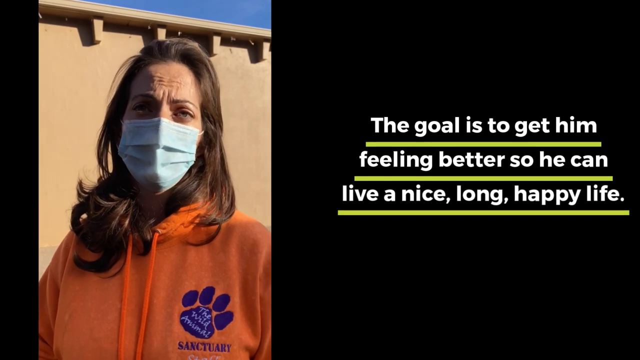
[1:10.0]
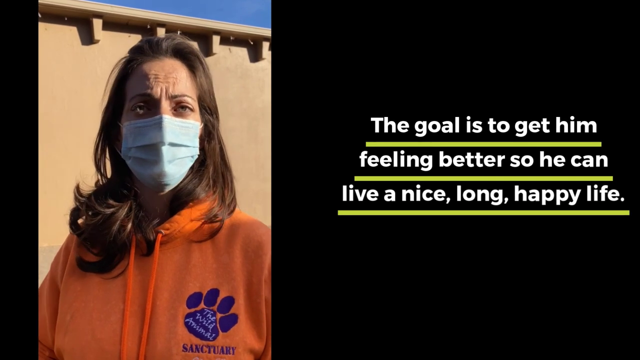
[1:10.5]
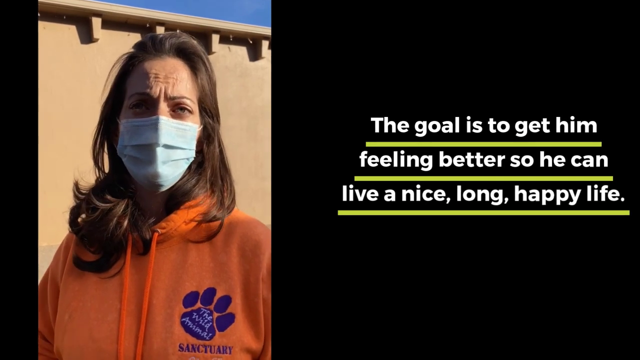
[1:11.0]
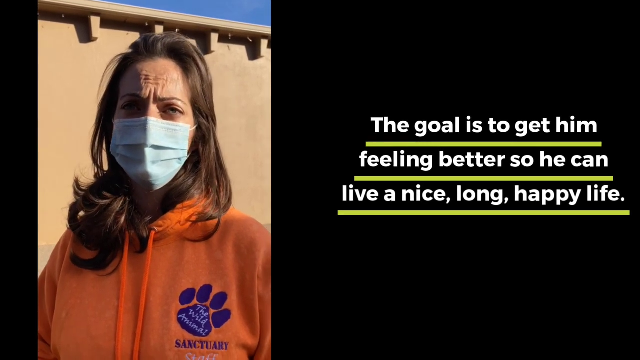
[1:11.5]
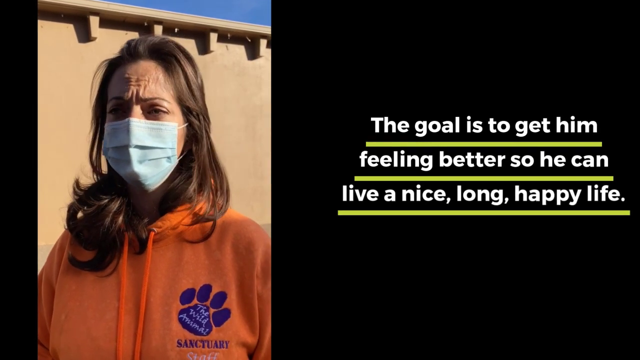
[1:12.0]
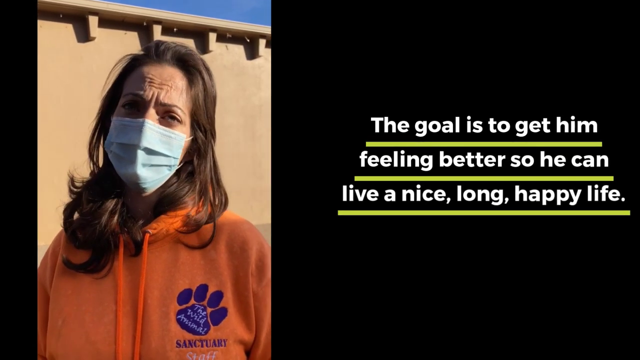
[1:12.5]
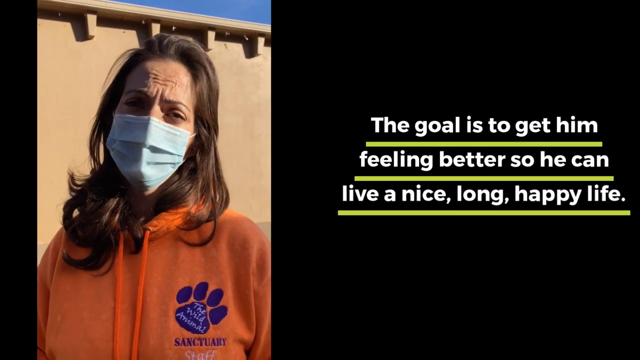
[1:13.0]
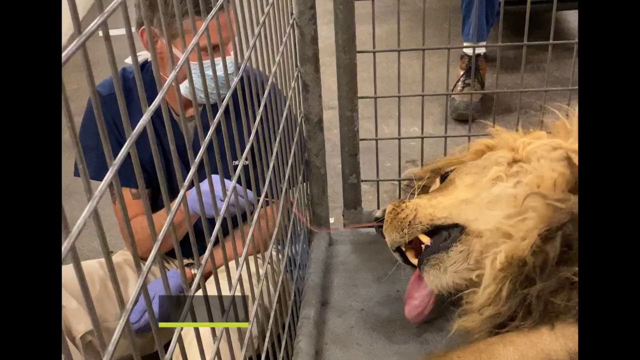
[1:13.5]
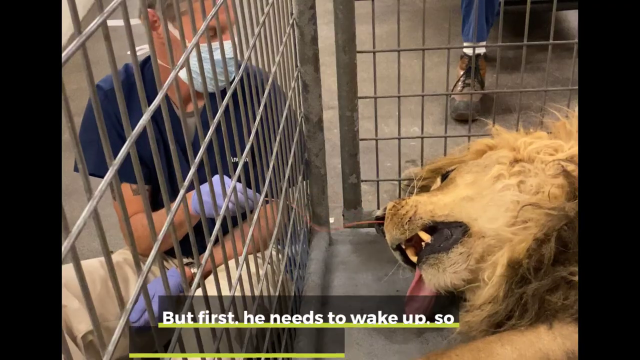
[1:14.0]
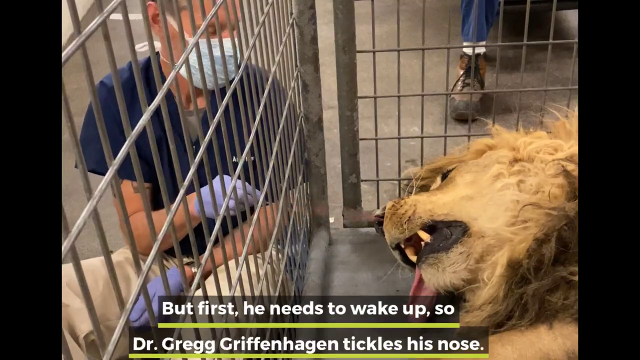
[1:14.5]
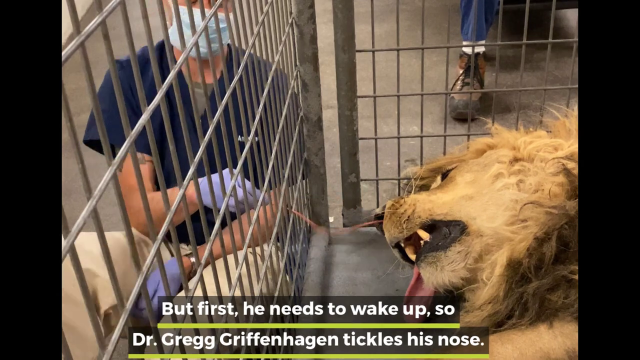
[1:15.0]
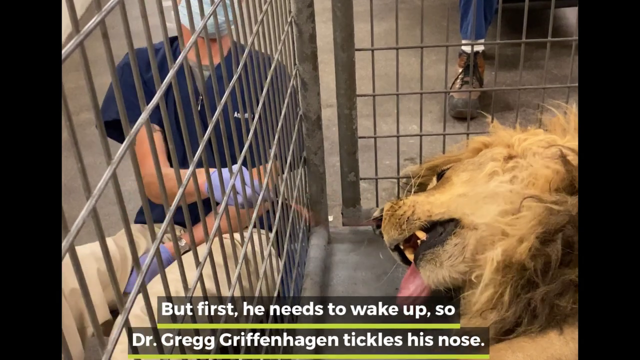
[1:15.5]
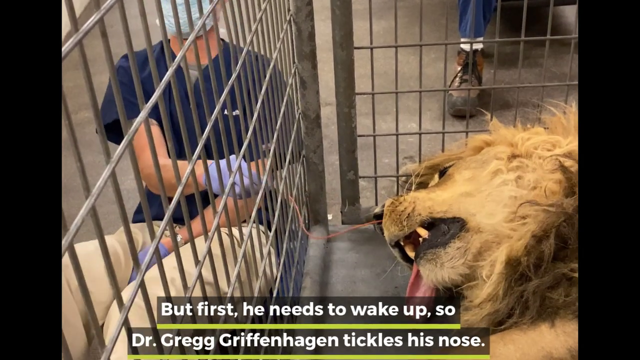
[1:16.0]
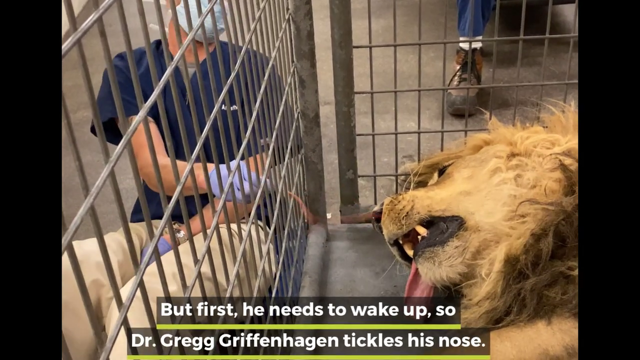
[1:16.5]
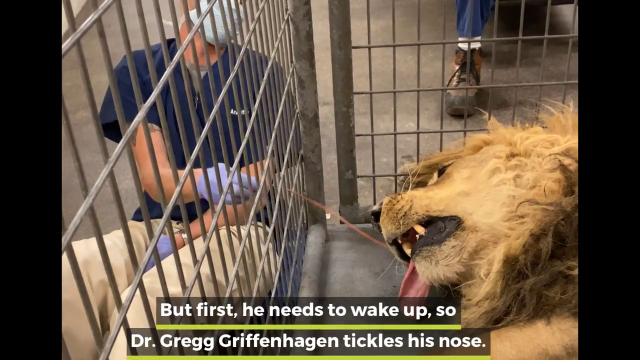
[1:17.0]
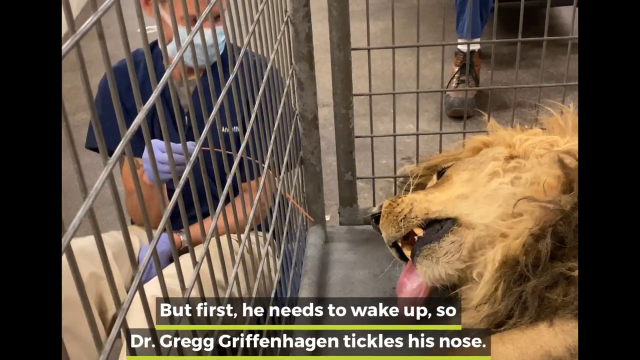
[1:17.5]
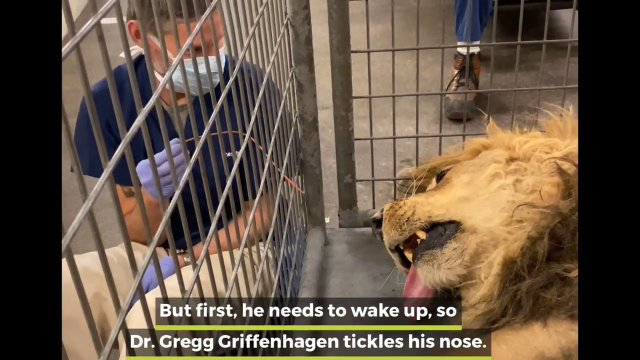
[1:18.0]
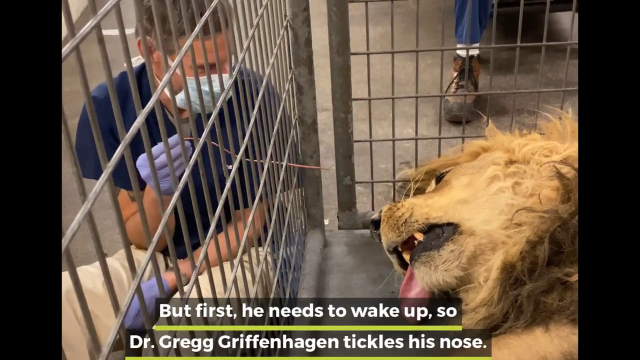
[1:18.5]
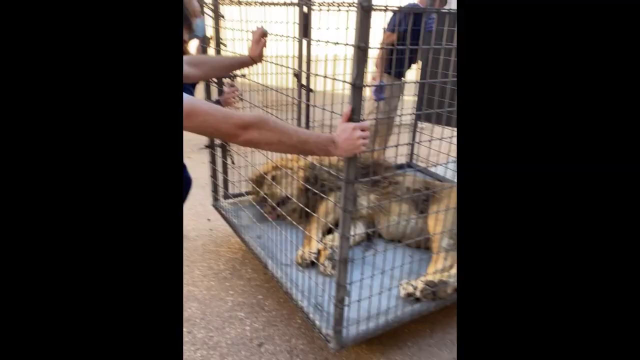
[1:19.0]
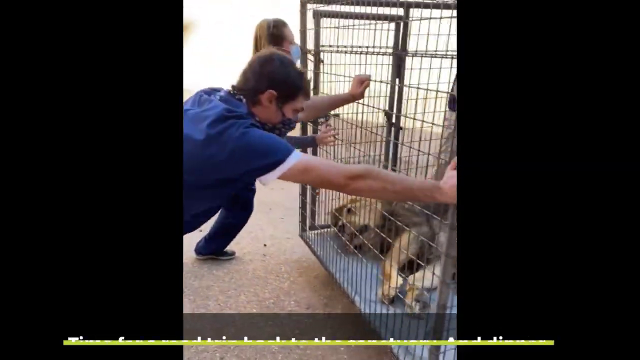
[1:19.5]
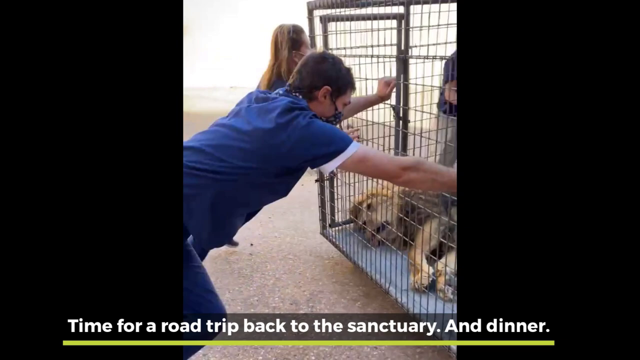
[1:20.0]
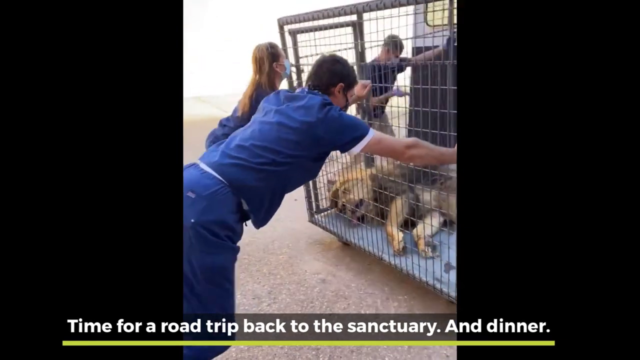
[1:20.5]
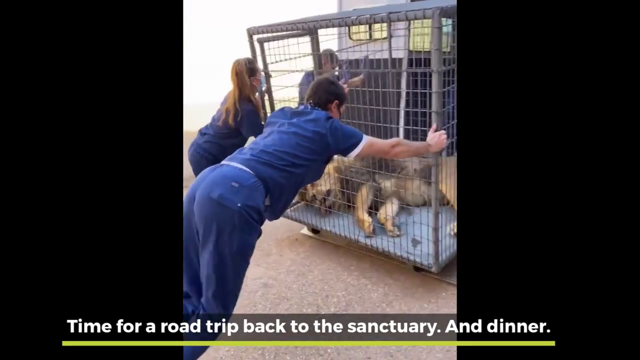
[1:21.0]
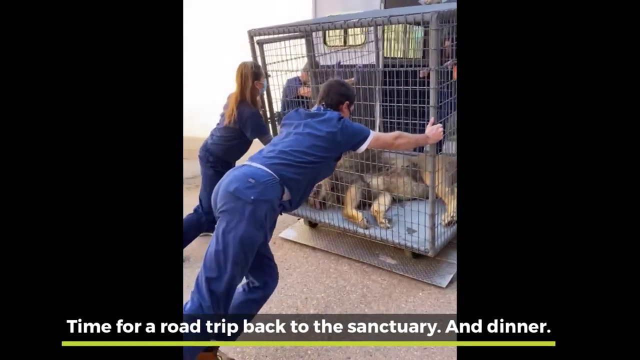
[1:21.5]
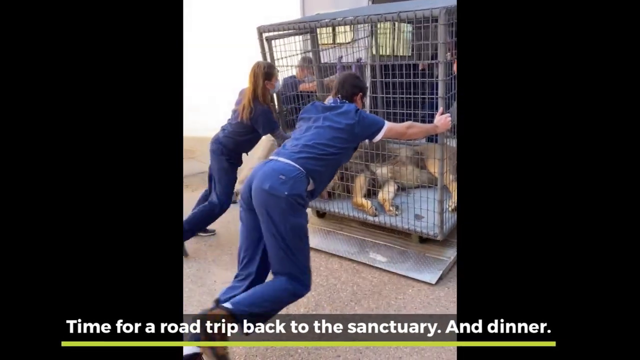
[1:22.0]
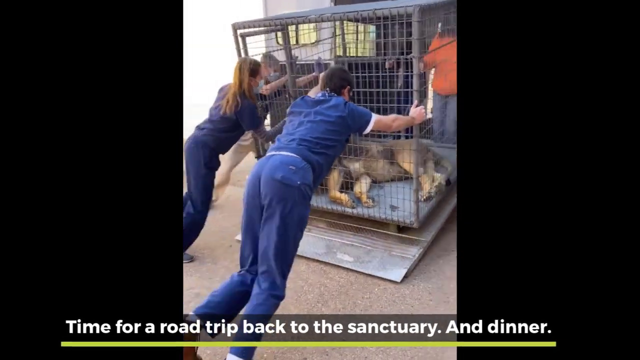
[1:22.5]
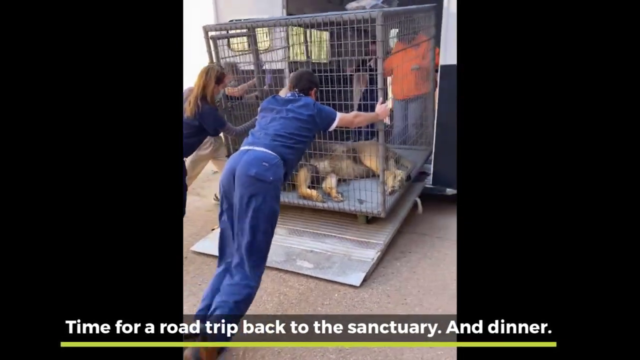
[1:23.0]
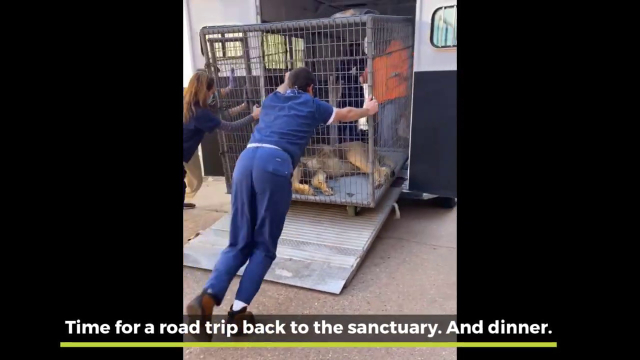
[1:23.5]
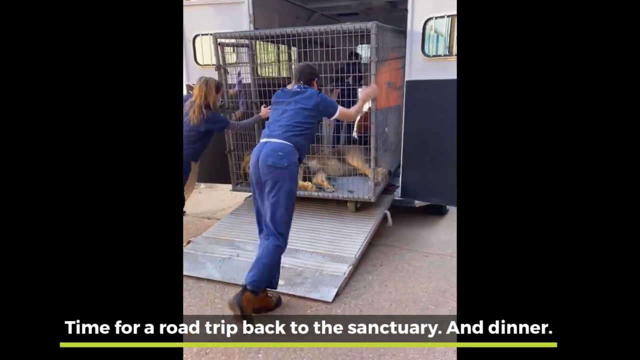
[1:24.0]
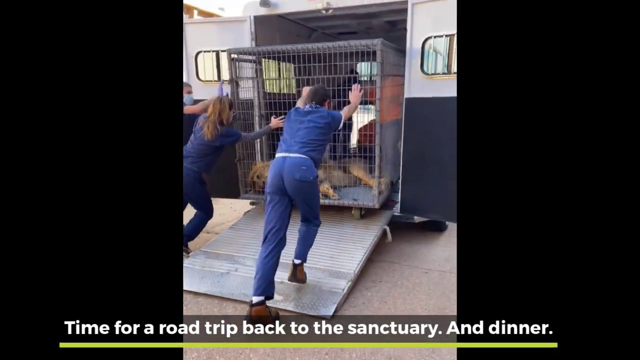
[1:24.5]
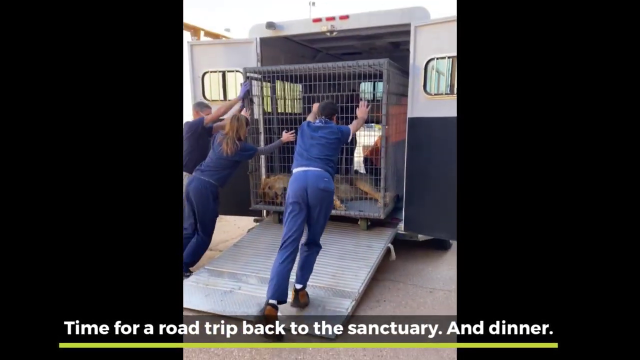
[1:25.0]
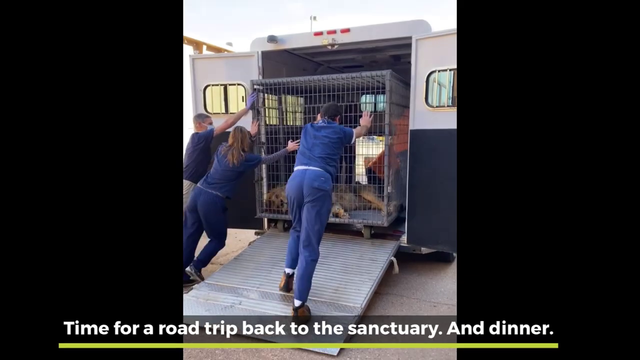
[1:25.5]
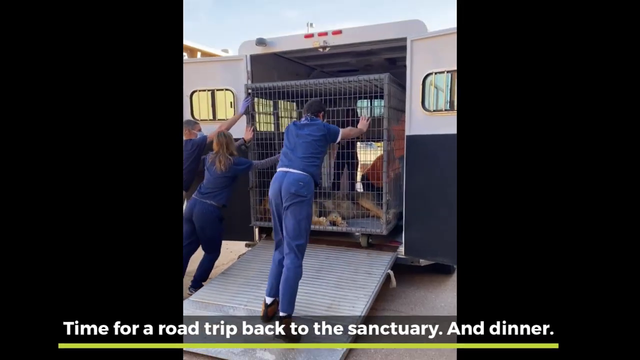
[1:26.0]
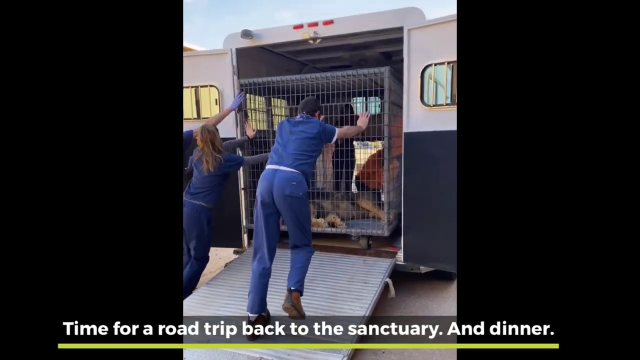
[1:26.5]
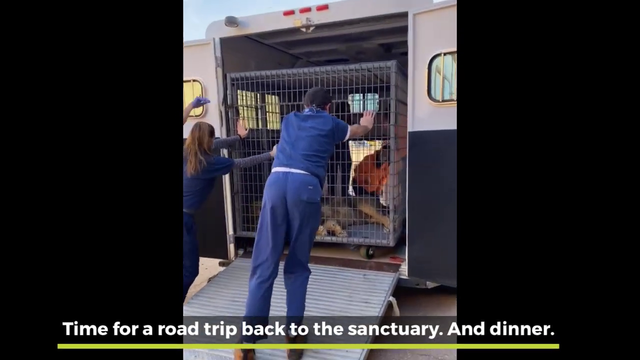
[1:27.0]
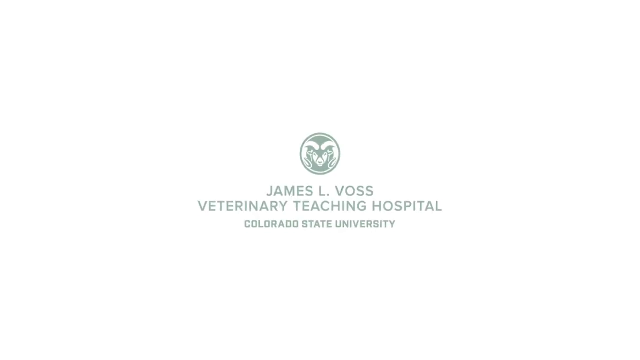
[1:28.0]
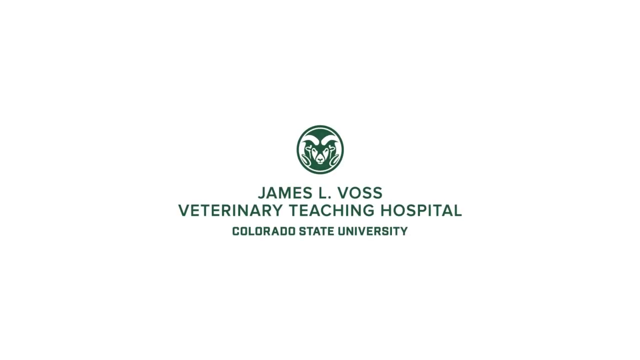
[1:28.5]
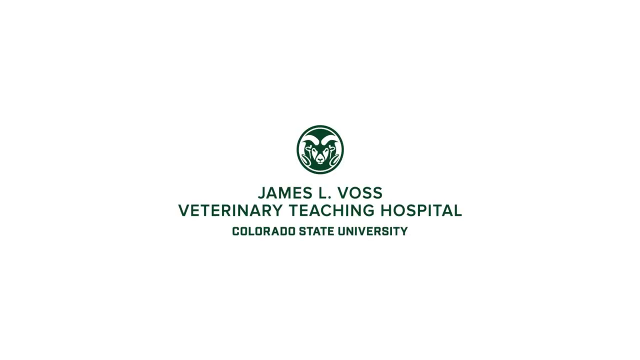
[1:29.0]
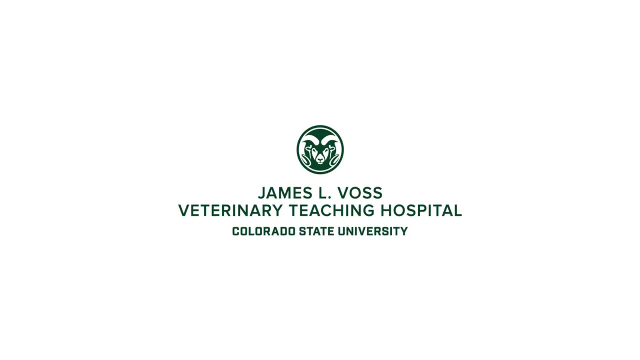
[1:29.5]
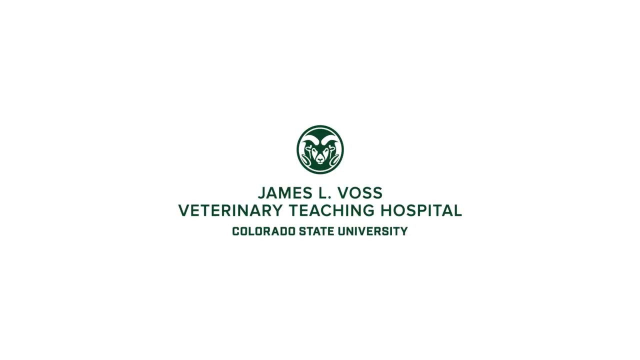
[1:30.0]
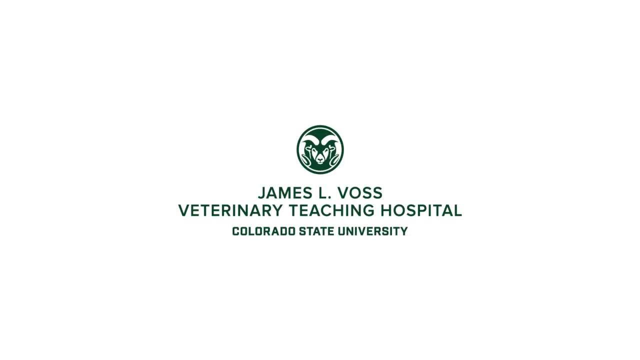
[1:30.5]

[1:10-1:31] A woman on the left side of the screen wears a blue medical mask and an orange hoodie with a purple paw print over her left chest, and has wavy brown hair that falls just past her shoulders. On the right side, white text underlined in light green reads "the goal is to get him feeling better so he can live a nice, long, happy life." In another scene, a lion lays in a cage with its head kind of down on the floor, its mouth open and its tongue hanging out; it looks like it is kind of struggling to breathe a little and is really sick. There seems to be a vet in a blue shirt, blue hospital mask and blue latex gloves holding a light brown wire into the cage next to the lion's nose, apparently trying to play with it a little. Text at the bottom reads "but first he needs to wake up So time for a road trip back to the sanctuary and dinner." Another video shows the lion laying in a large cage while about four vets in blue scrubs push the cage up a ramp into the back of a large truck, the lion kind of laying there looking sick. The ending screen is white with a circle containing a small logo that kind of looks like the front of a dog's face, and underneath it reads "James L. Voss Veterinary Teaching Hospital, Colorado State University."